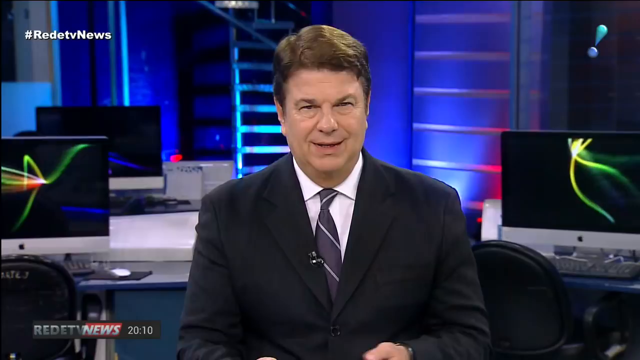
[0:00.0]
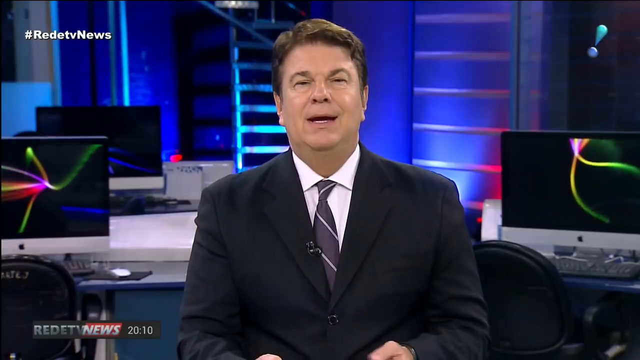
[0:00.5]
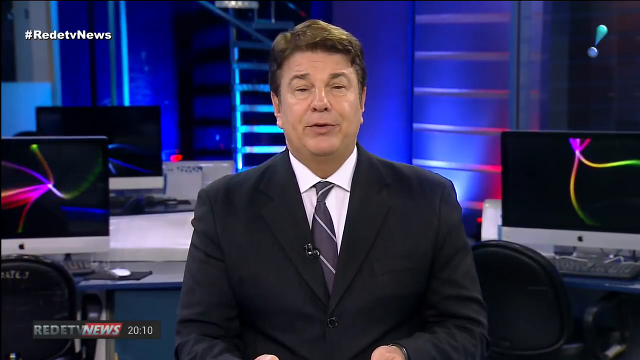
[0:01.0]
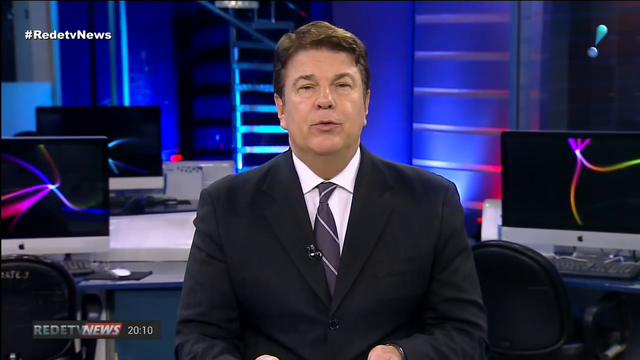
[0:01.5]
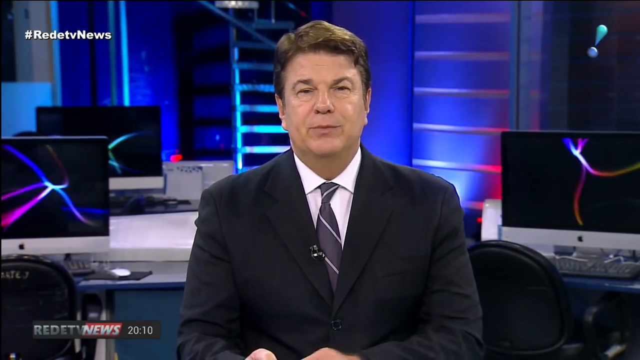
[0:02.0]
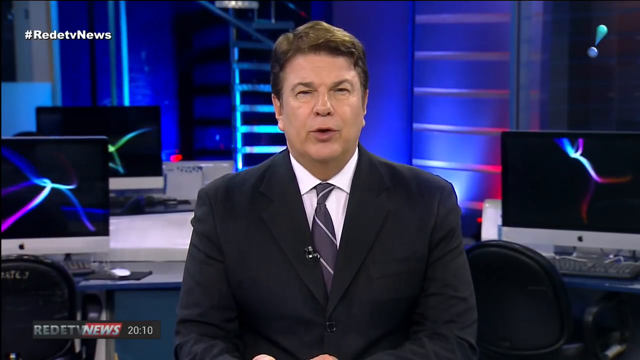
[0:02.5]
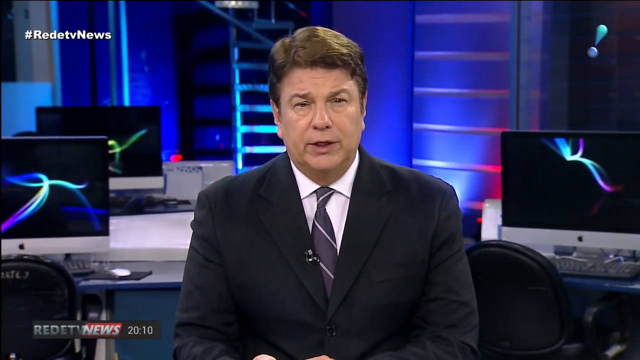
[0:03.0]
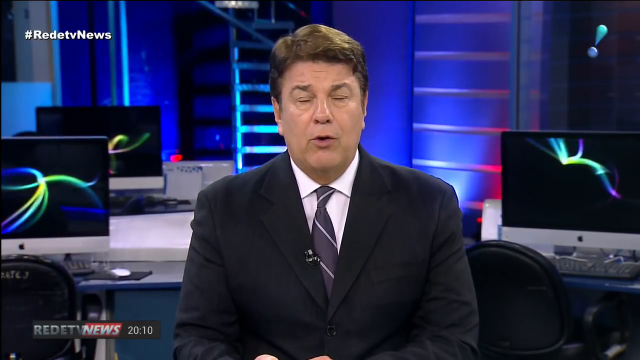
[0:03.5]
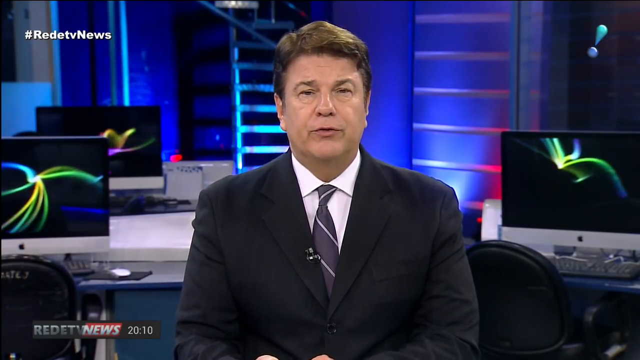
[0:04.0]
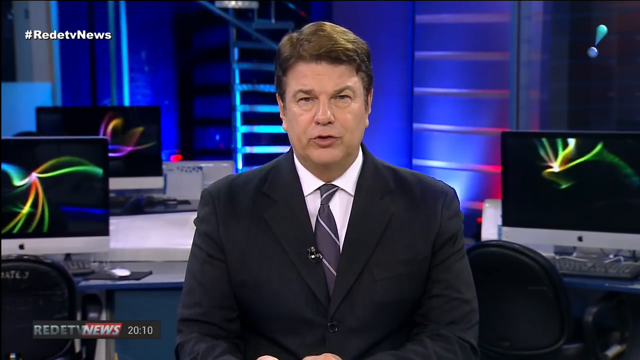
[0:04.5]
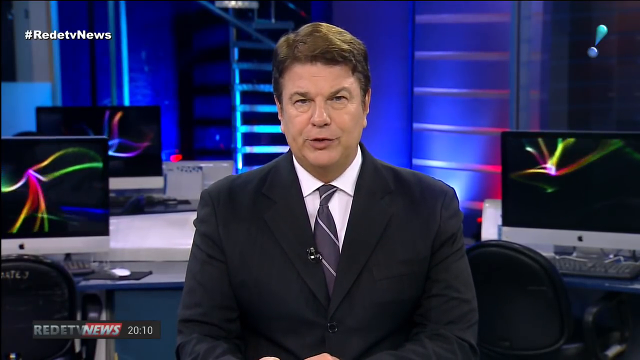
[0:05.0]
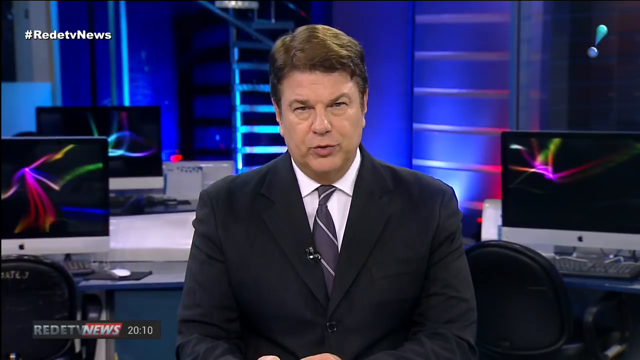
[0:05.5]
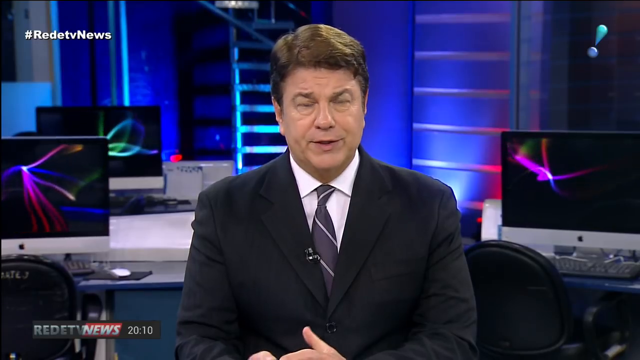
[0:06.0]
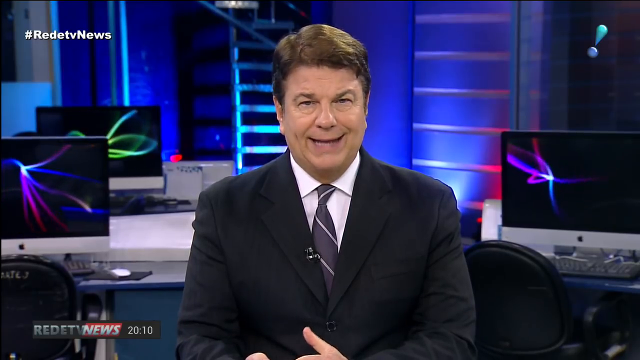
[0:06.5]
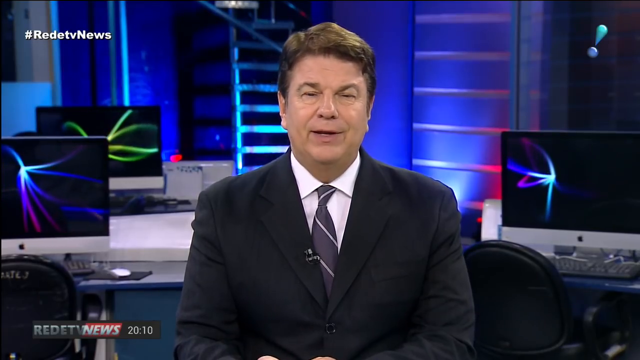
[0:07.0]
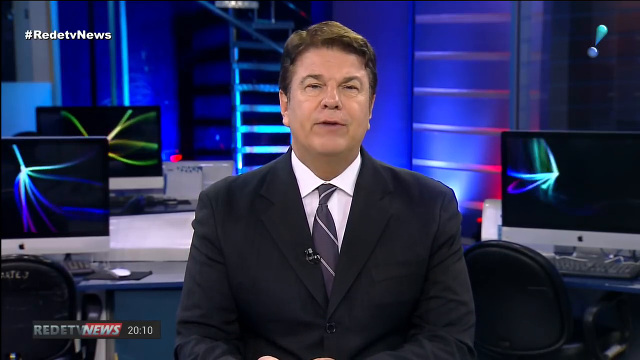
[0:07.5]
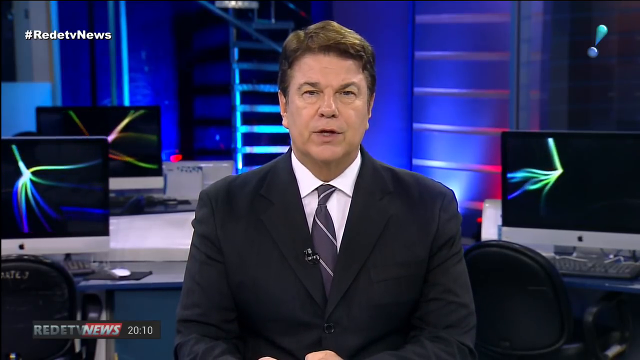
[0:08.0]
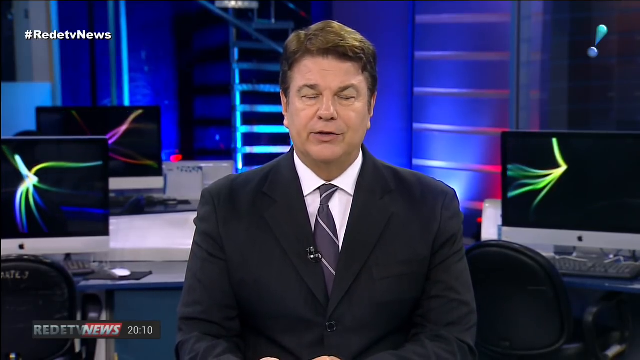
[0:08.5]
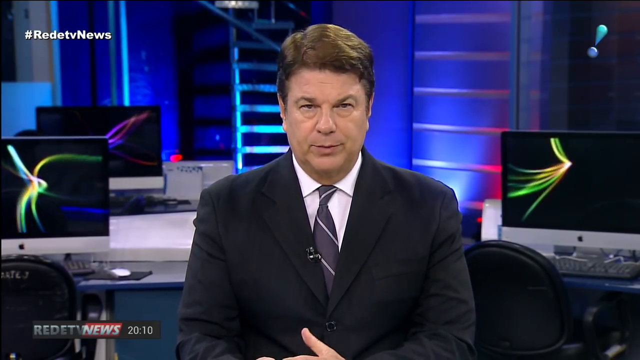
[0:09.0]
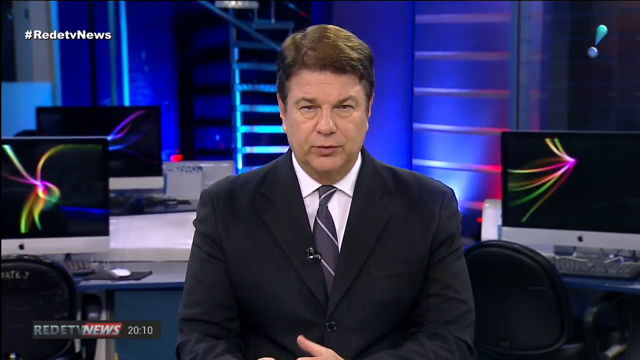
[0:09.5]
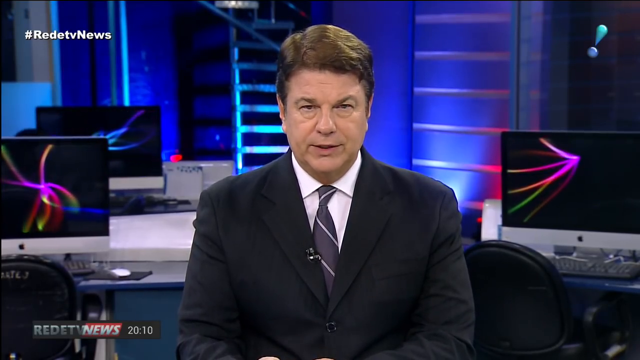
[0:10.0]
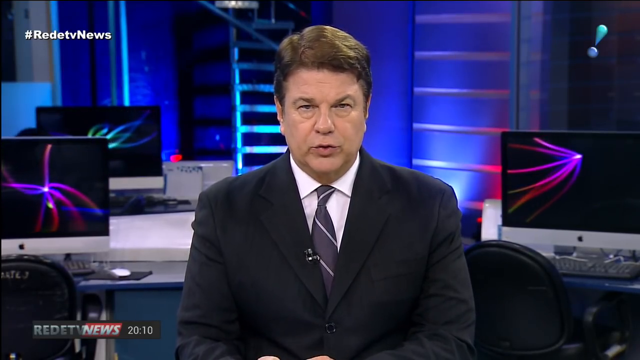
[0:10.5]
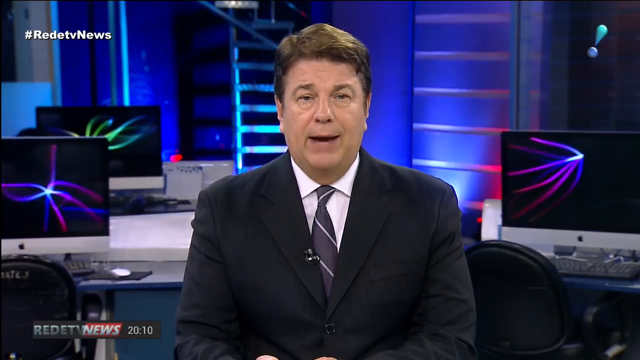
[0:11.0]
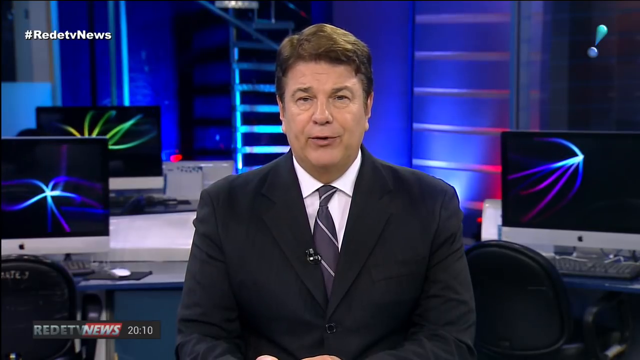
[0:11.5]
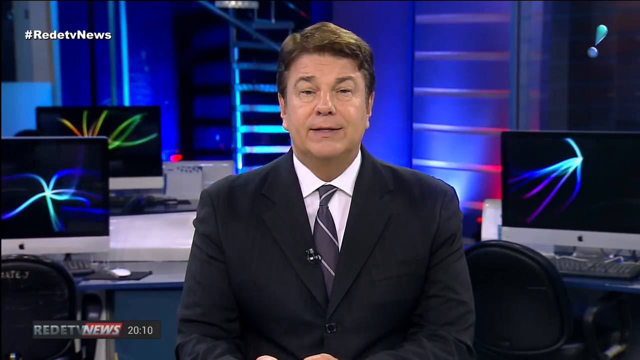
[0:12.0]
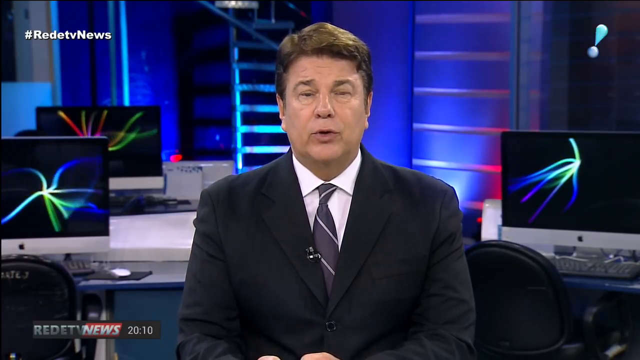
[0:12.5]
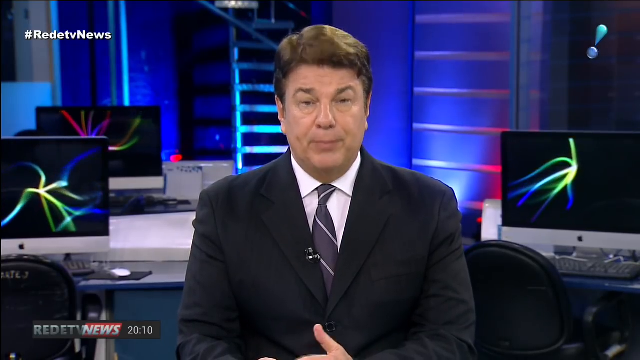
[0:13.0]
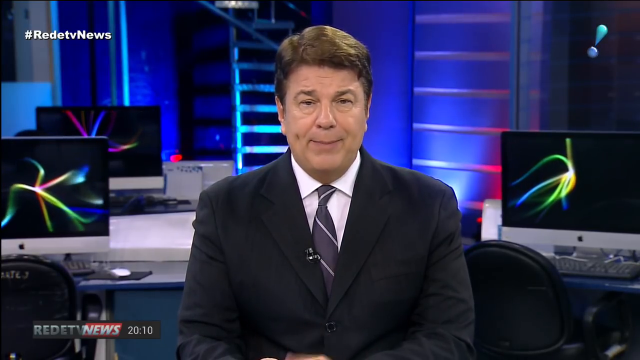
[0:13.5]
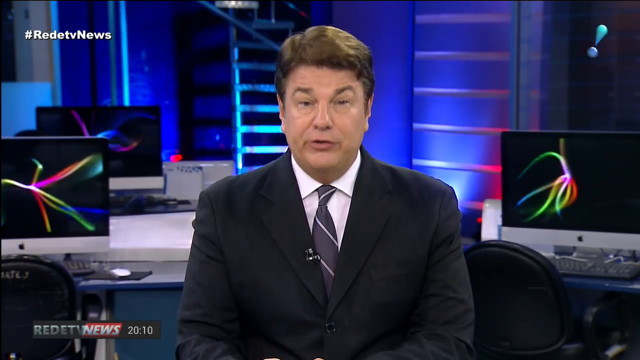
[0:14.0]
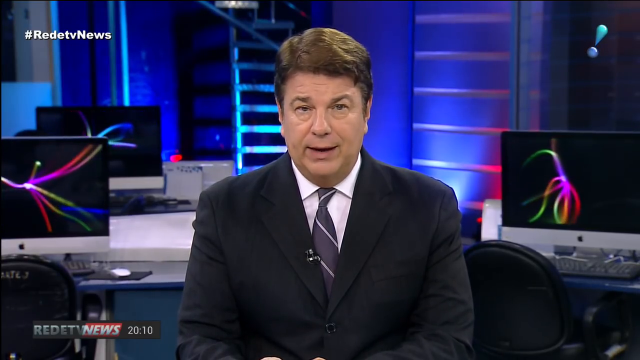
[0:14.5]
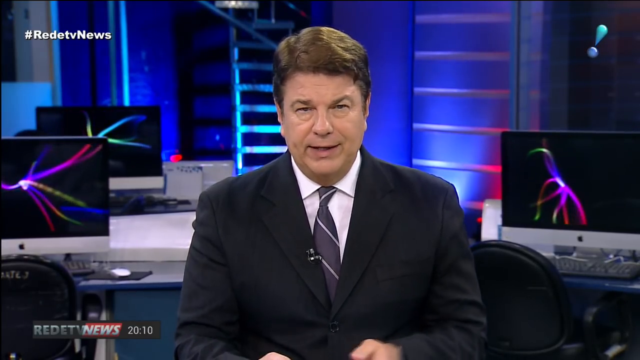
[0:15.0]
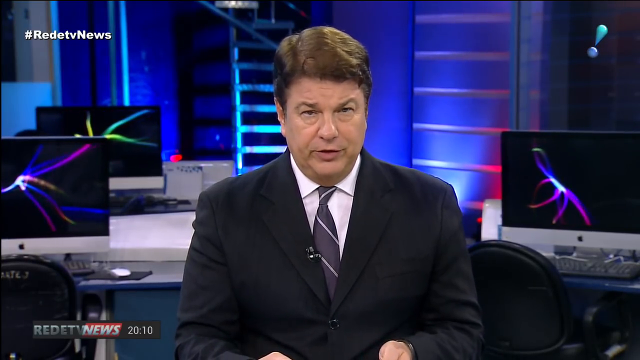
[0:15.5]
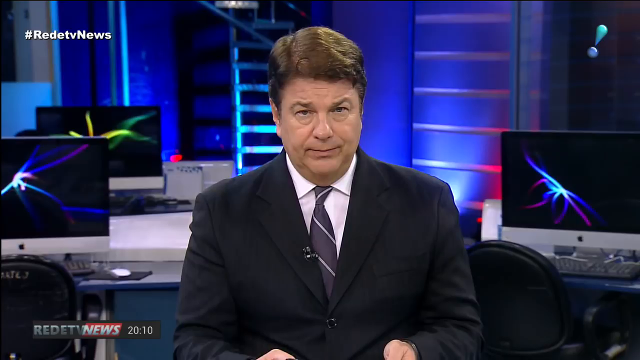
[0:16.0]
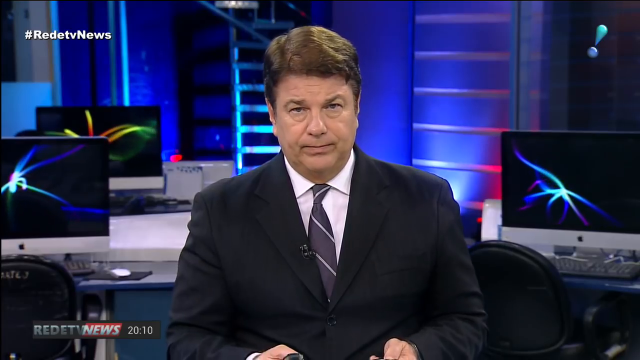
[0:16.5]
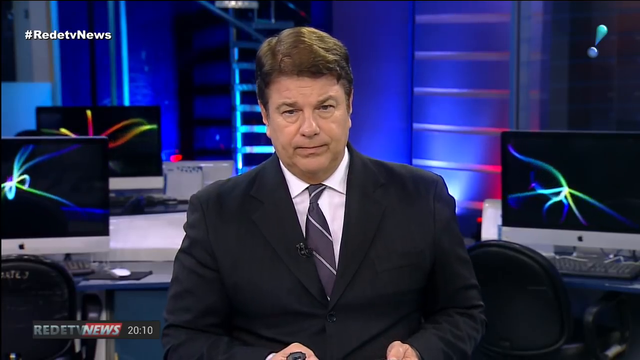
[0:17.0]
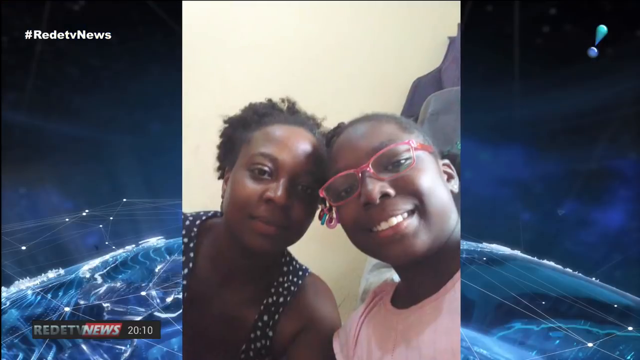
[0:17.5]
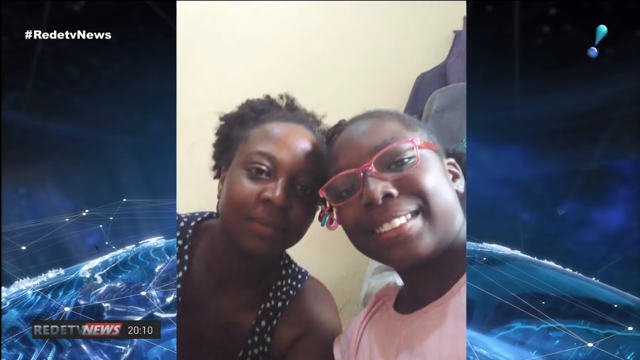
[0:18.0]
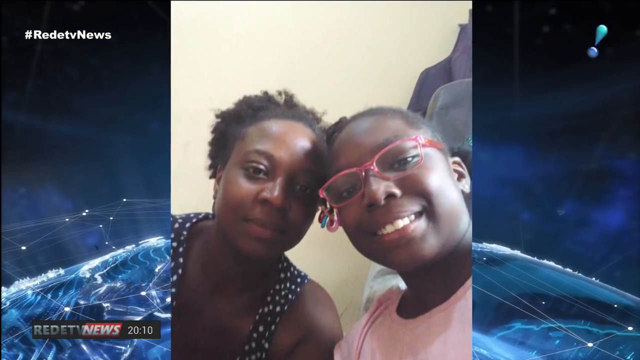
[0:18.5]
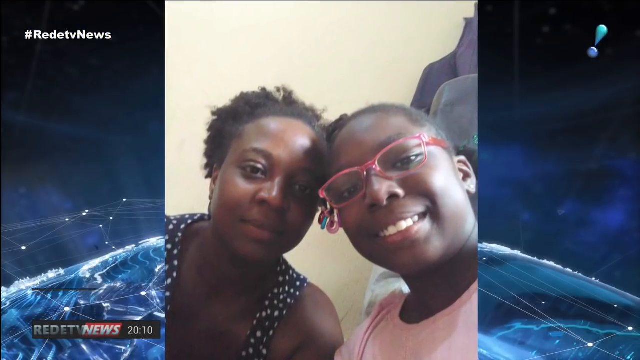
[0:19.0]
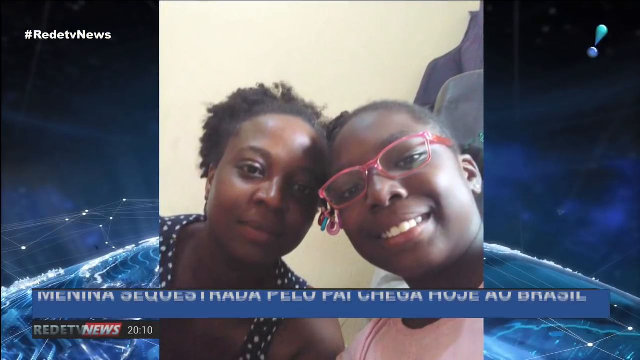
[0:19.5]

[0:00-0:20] A newscaster sits in front of the camera, with "Redetv news" in the upper left corner of the screen. He is broadcasting from a newsroom with many monitors behind him; they are on screensavers showing bursts of light in all different colors, like images scrolling across the screen. He wears a black suit and a black tie with white diagonal stripes. Two women are then shown, one of whom looks young and could be a child; one has pink glasses on. They are rubbing their heads together, posing for a picture with their foreheads together. On the screen is writing that looks like it could be a different language, and something flashes in blue across the bottom of the screen.